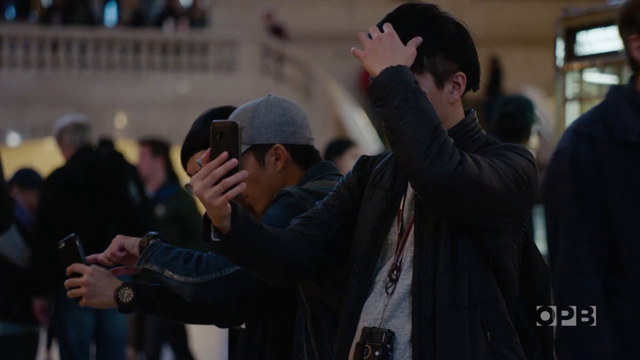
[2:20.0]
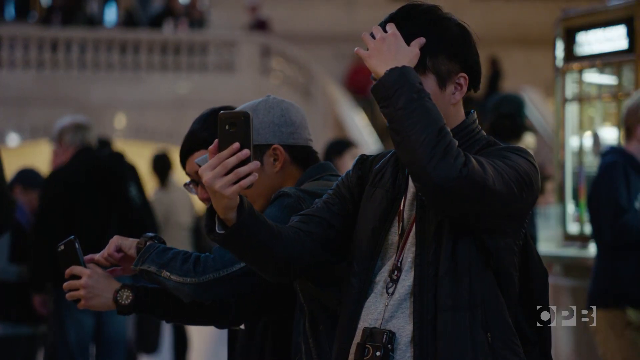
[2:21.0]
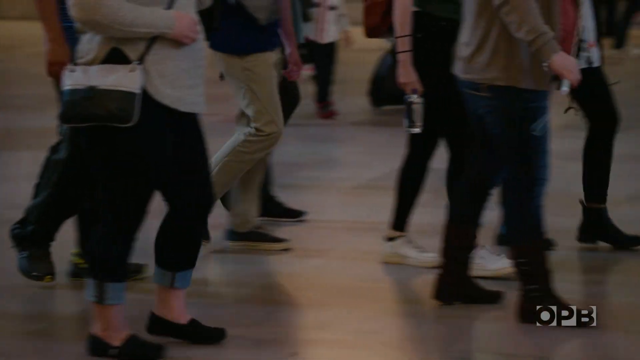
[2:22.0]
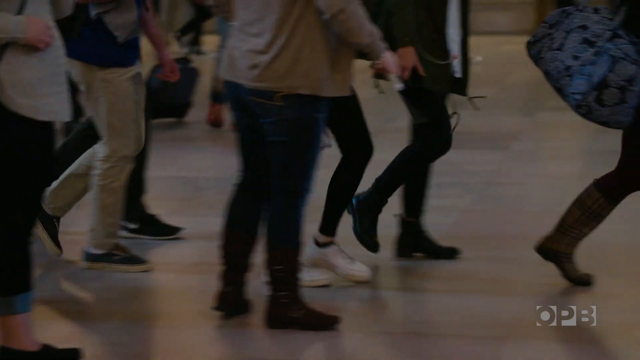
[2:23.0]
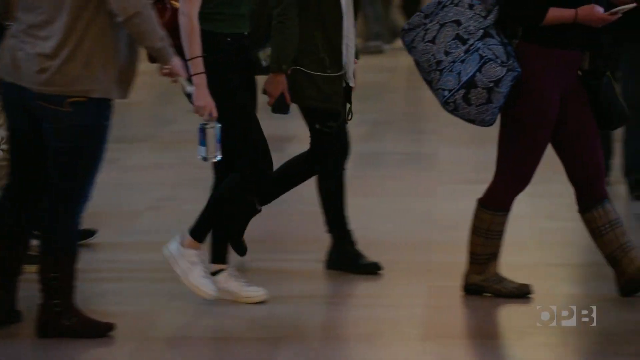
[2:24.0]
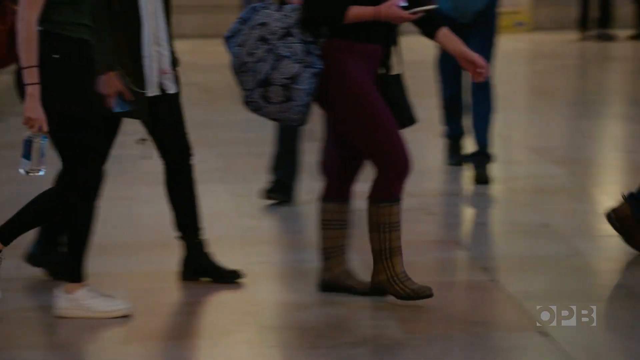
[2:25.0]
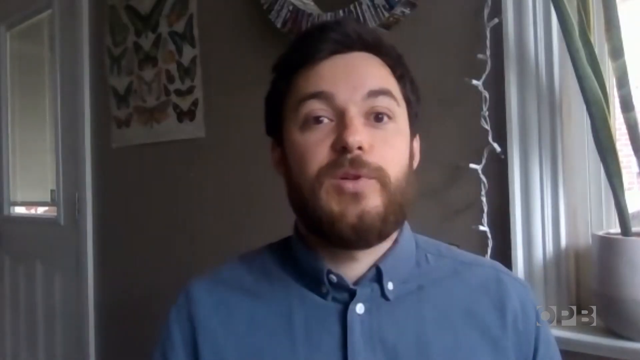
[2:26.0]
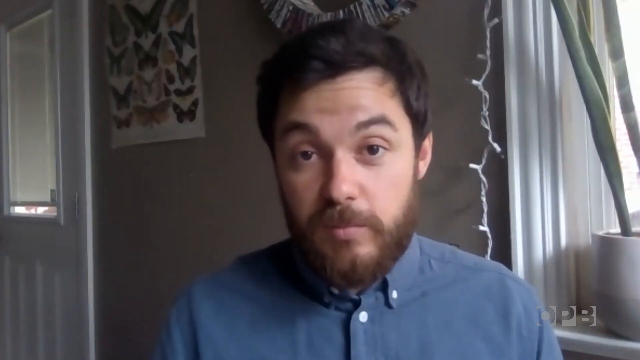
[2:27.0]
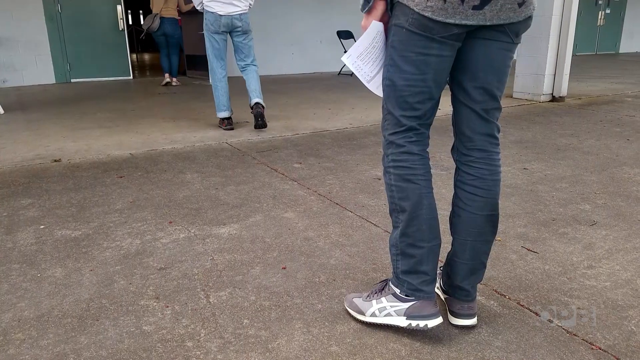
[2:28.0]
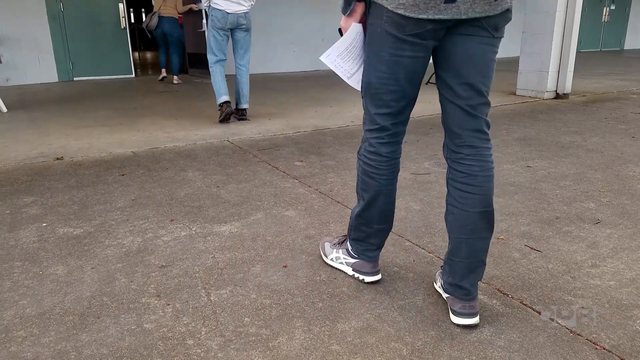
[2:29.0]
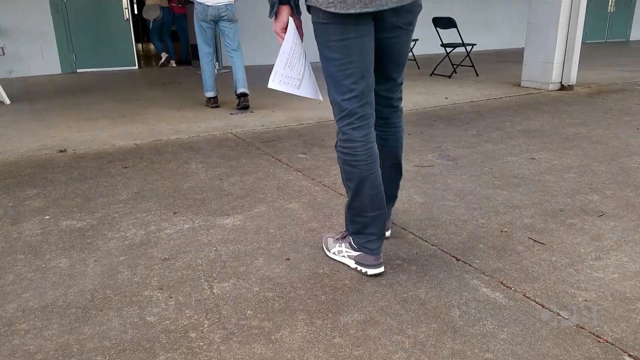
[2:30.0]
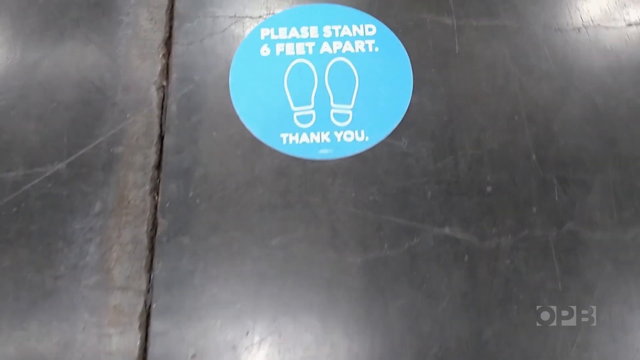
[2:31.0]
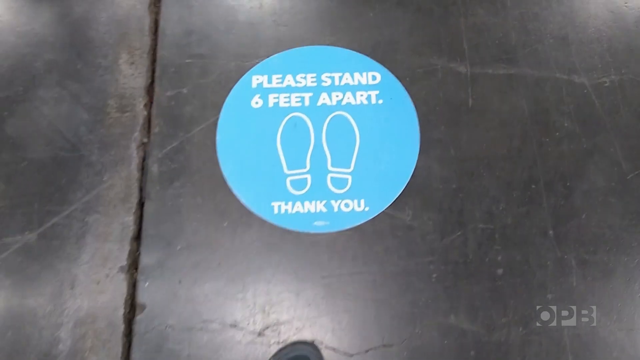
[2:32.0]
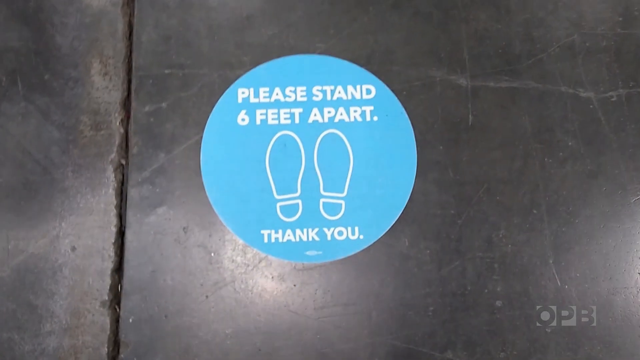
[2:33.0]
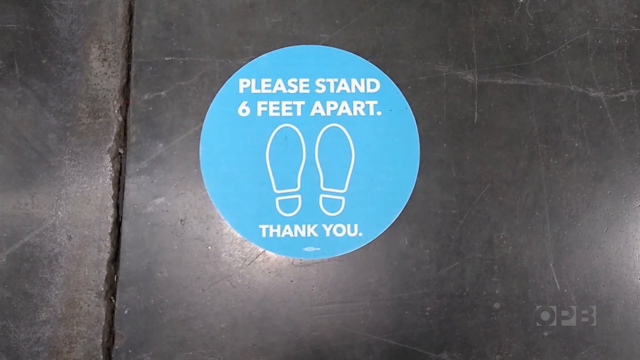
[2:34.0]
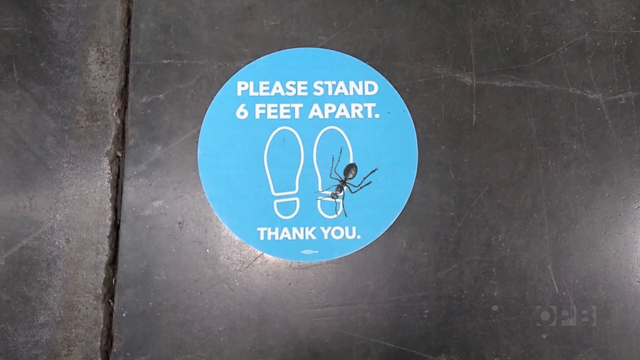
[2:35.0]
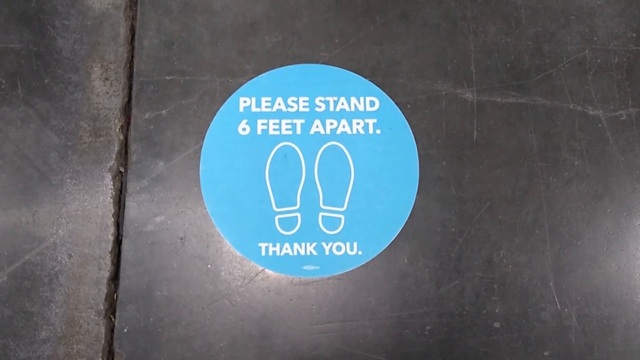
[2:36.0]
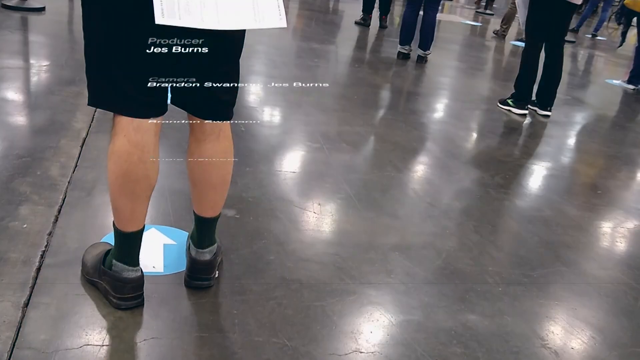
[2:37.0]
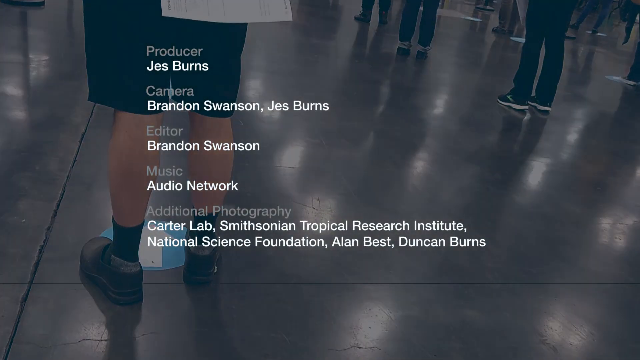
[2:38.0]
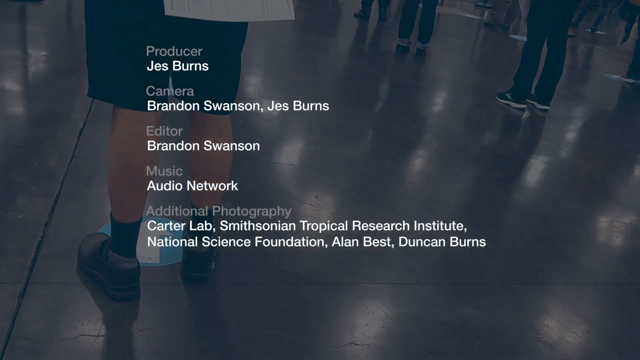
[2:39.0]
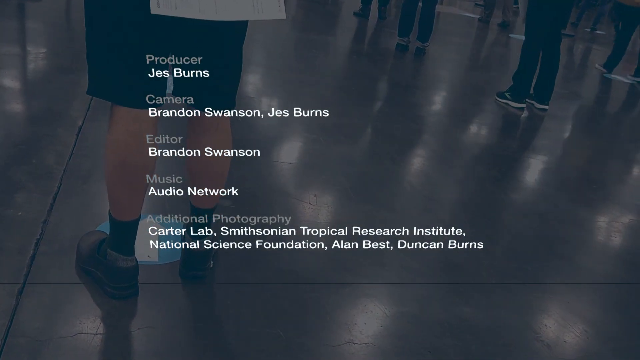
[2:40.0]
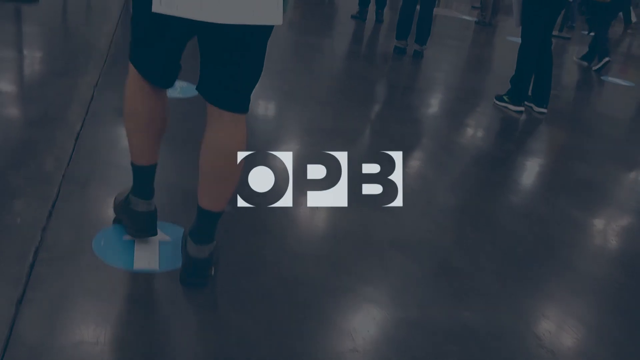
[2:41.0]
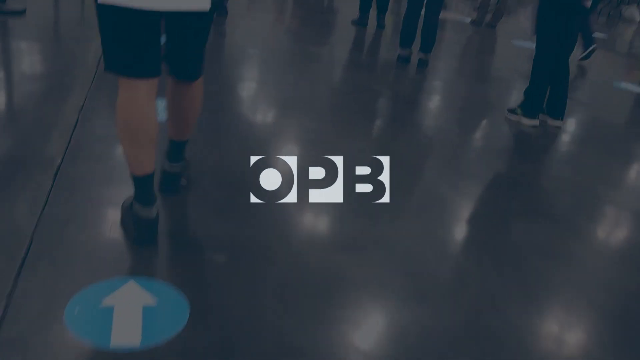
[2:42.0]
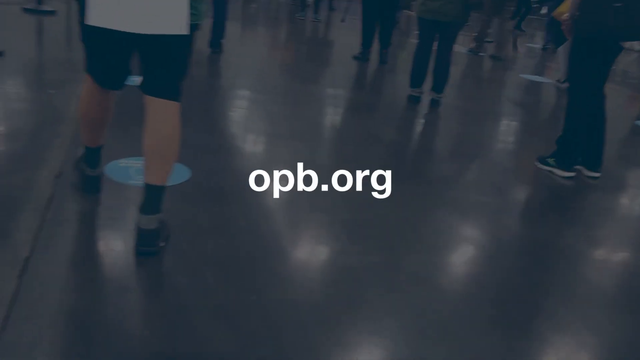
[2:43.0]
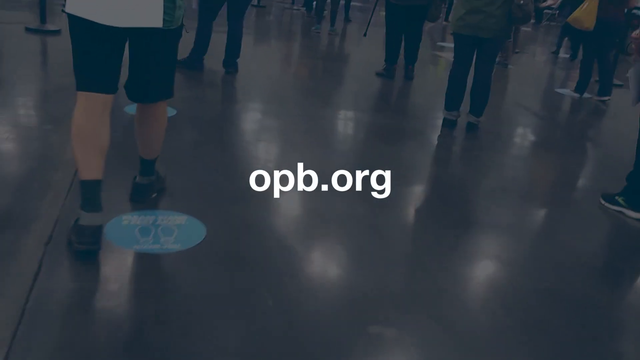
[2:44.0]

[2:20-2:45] People walk around a great room, seemingly in slow motion. The video cuts back to the brown-haired man in the blue shirt from the University of Texas. A sticker on the floor reads "please stand six feet apart", and a giant ant walks across it. The final text reads "producer Joe Burns opb.org".